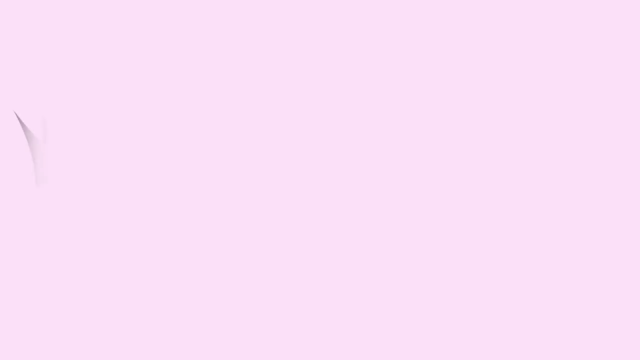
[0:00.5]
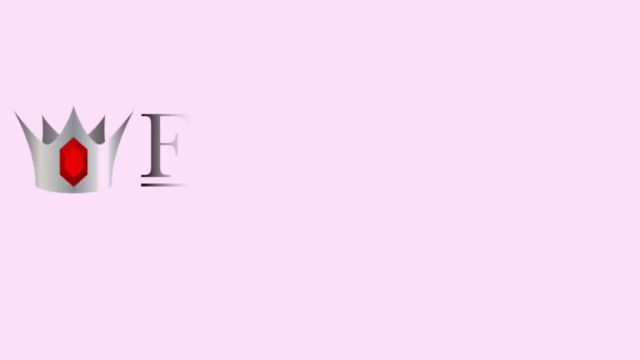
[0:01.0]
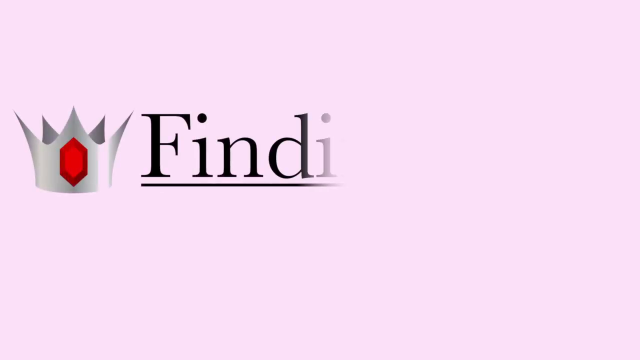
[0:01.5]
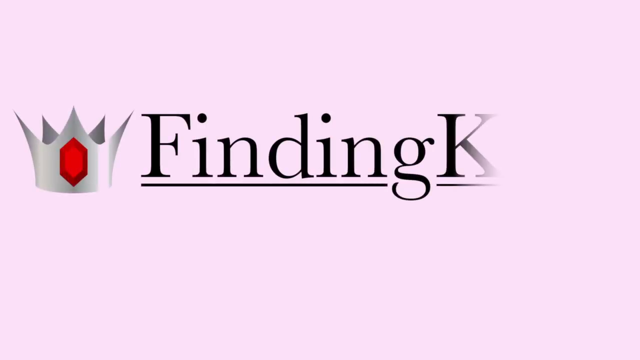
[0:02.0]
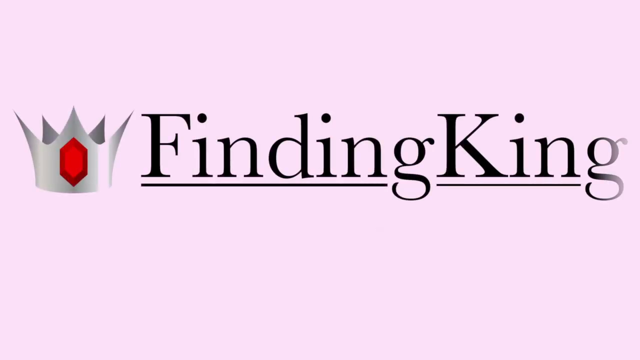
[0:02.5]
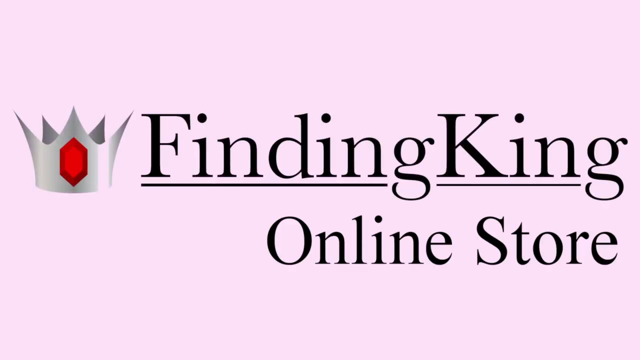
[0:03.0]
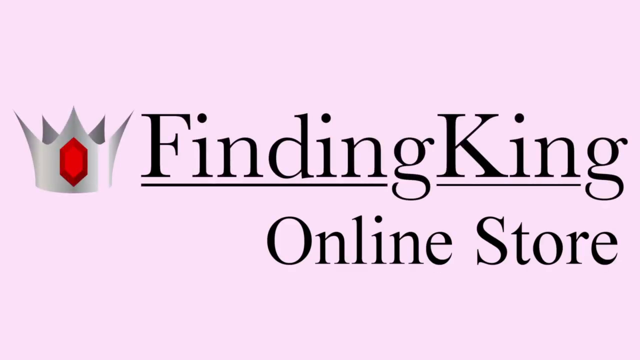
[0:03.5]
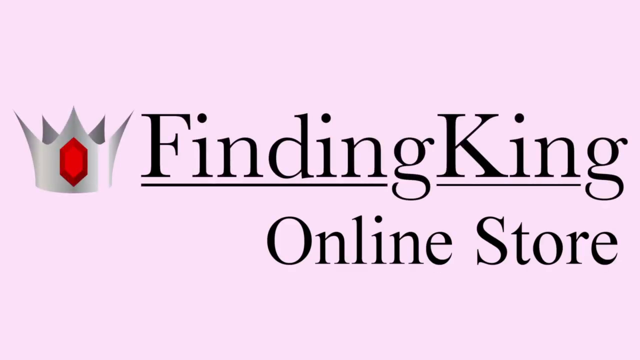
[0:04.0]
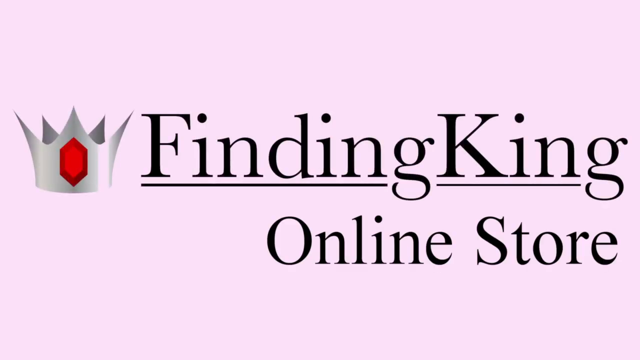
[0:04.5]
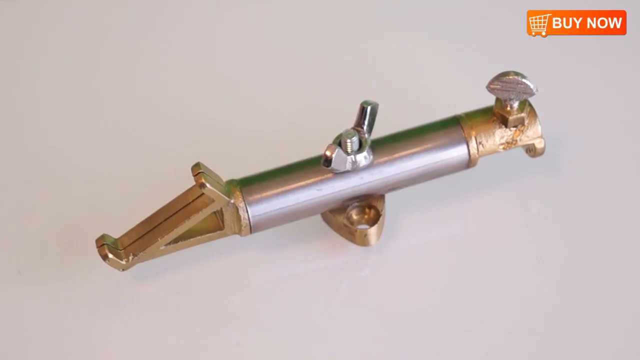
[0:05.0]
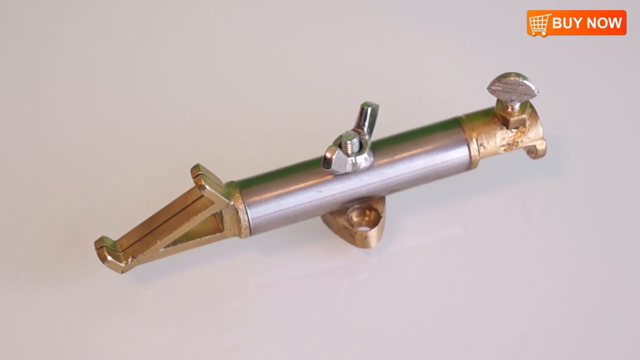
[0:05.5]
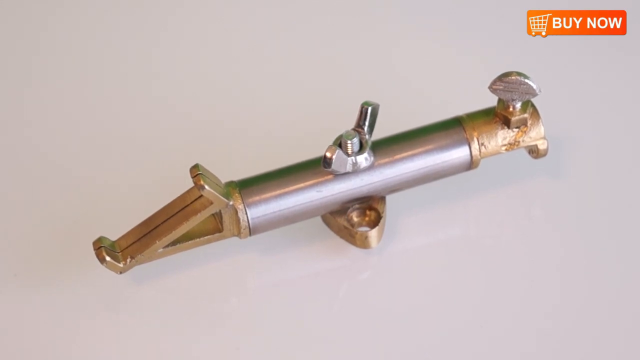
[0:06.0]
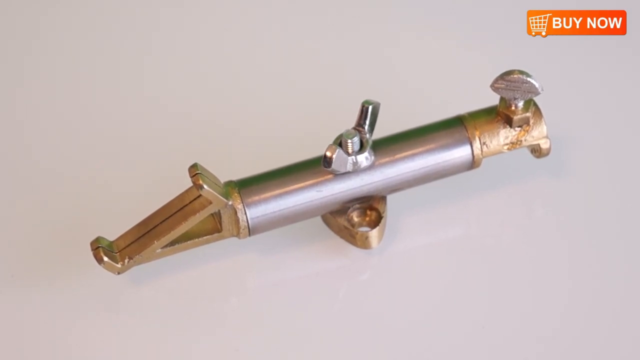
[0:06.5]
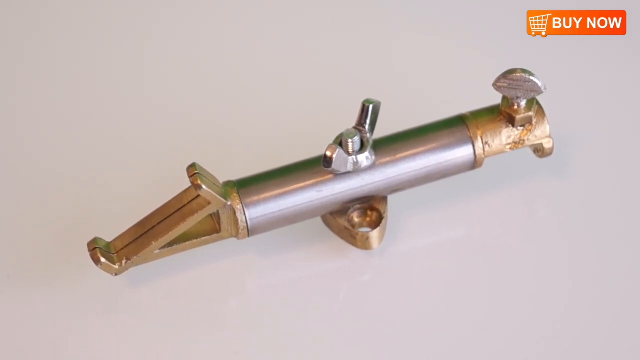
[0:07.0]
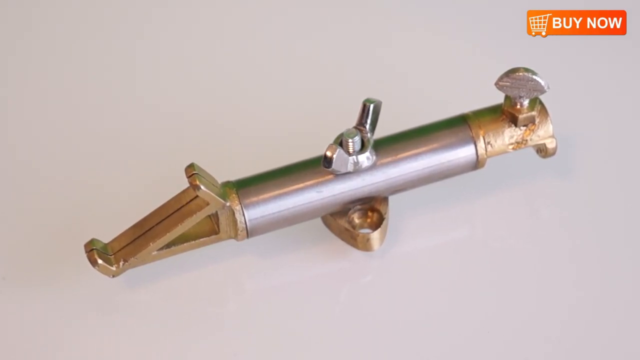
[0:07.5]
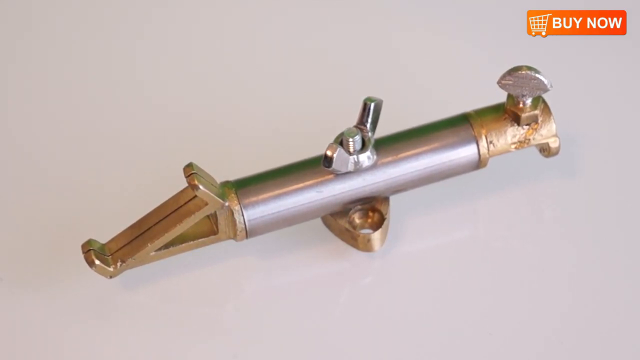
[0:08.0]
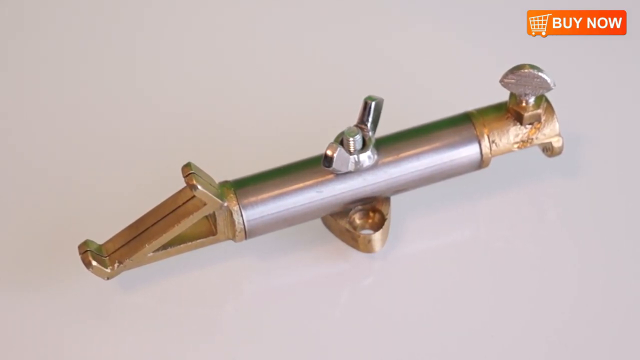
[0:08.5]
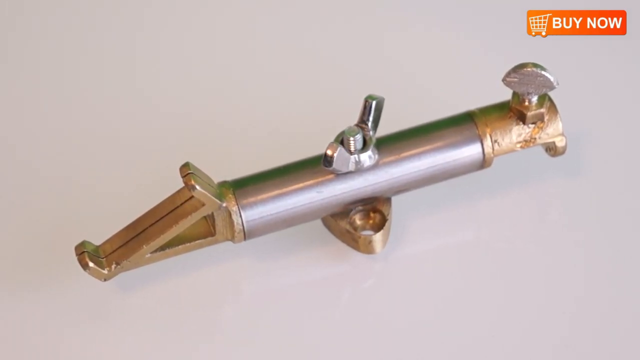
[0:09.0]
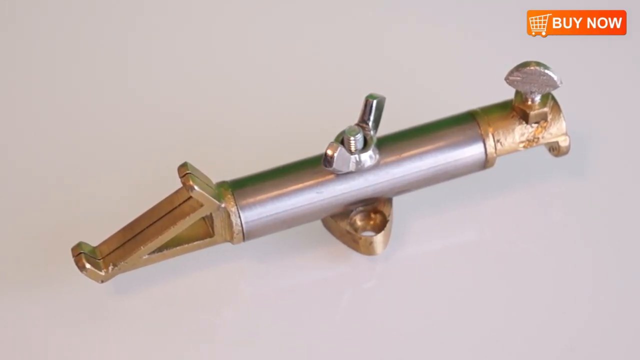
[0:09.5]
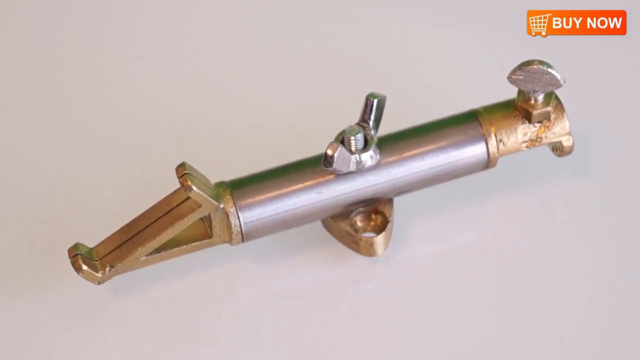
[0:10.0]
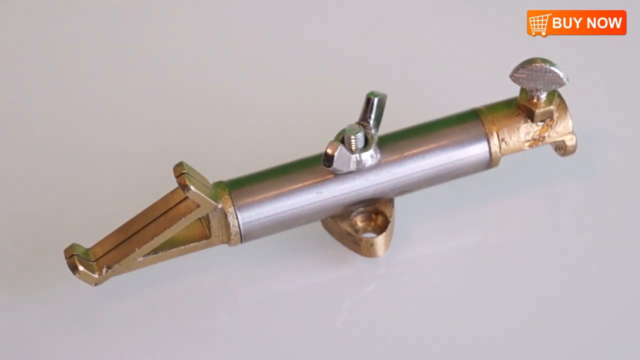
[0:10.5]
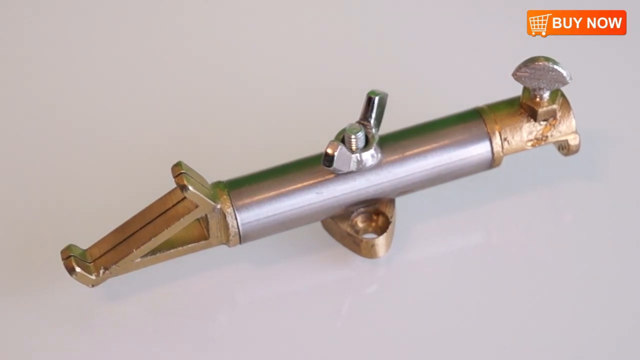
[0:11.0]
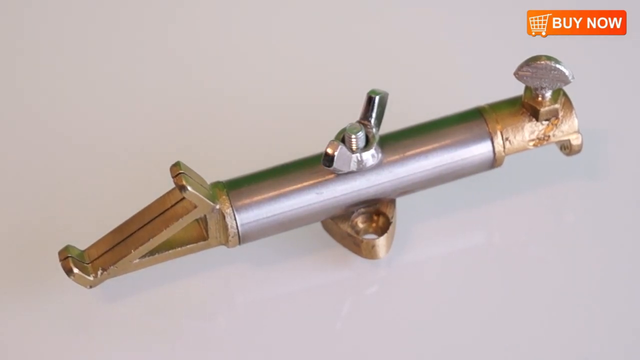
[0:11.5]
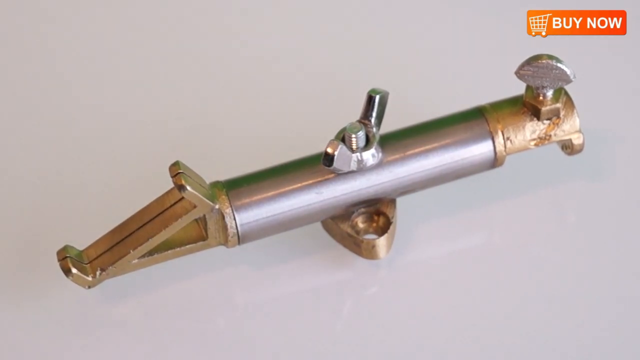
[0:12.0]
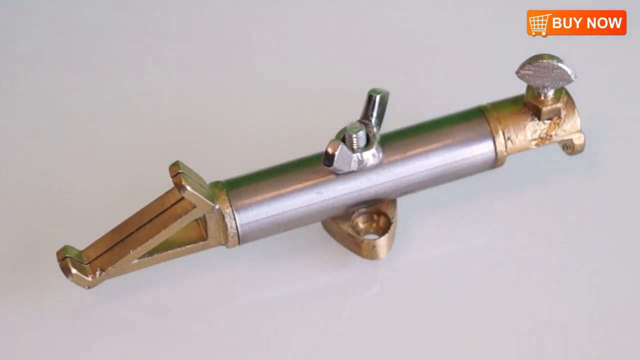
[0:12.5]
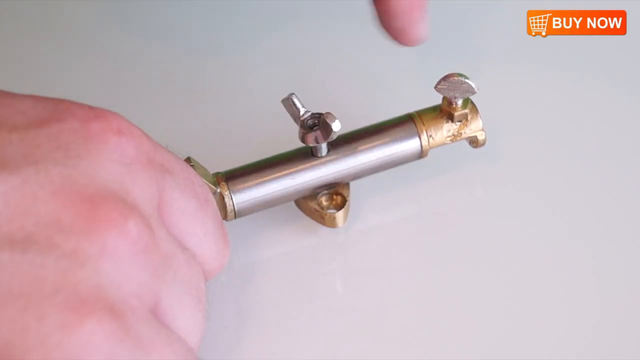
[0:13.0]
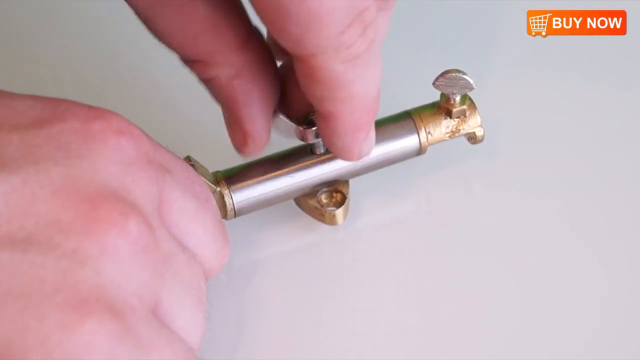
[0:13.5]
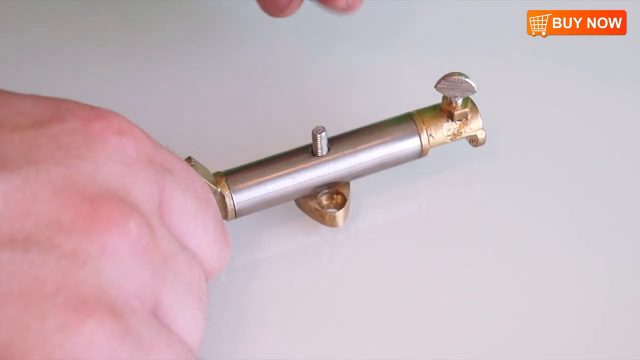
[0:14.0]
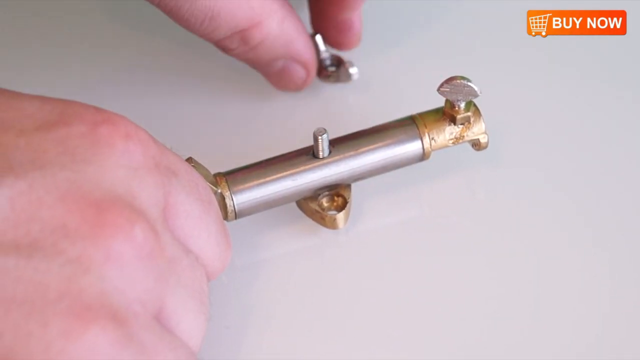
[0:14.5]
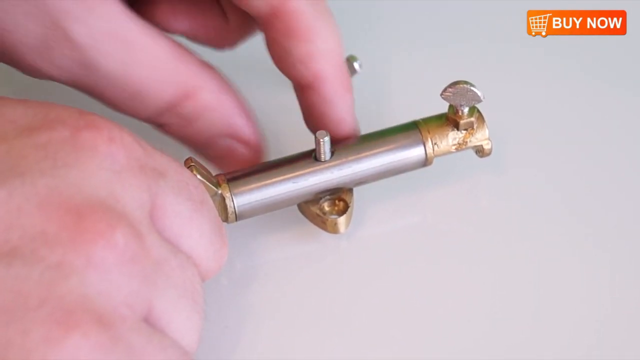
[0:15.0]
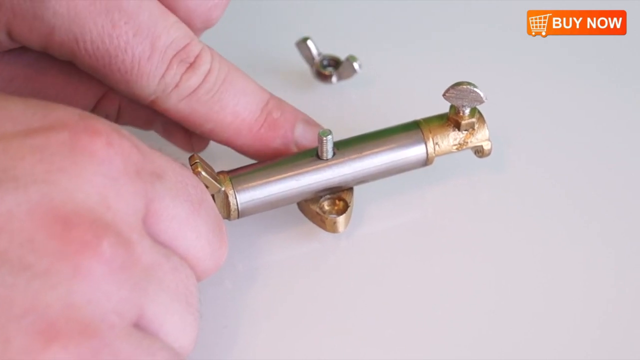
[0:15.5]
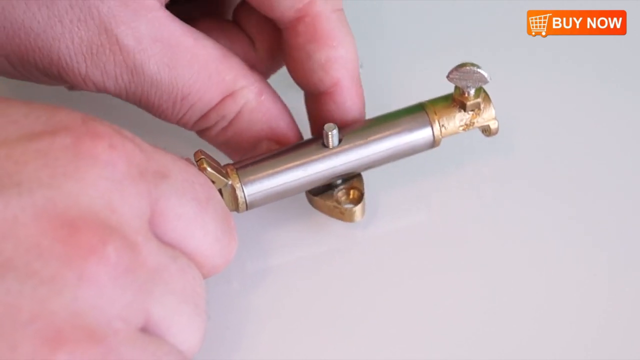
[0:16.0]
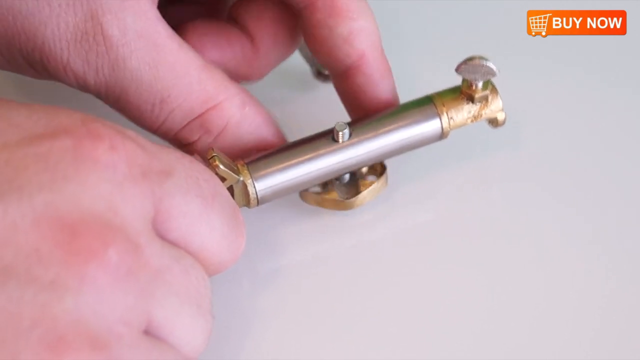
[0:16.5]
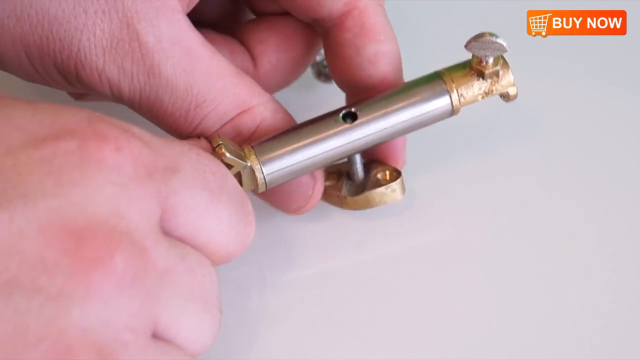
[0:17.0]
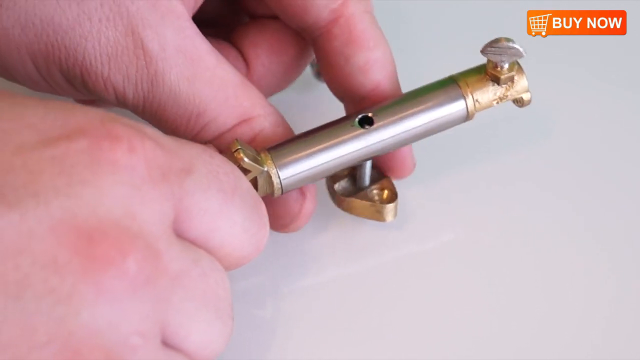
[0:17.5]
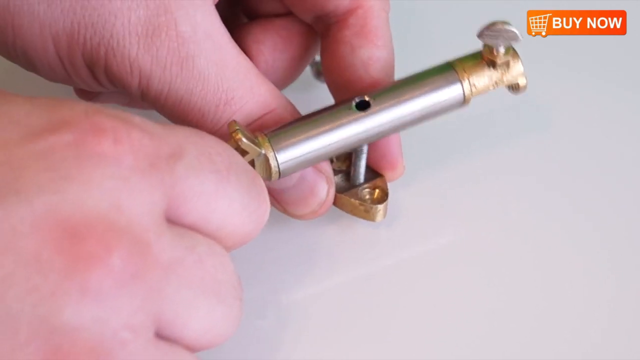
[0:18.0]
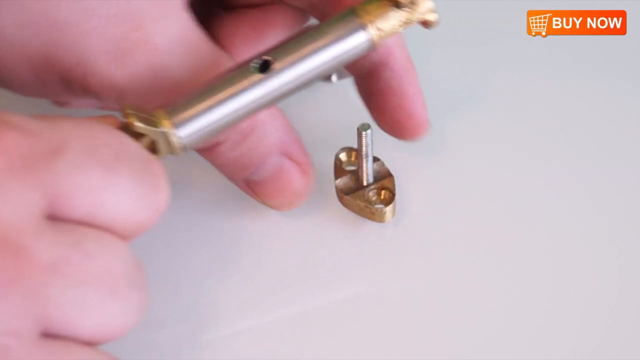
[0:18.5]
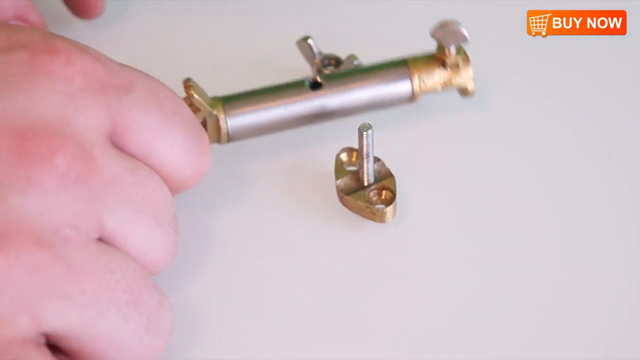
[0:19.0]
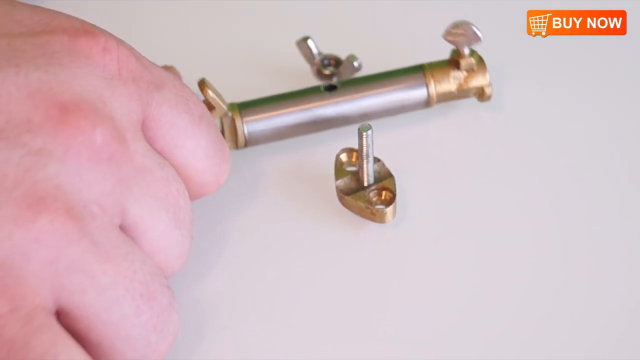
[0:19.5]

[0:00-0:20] A silver crown with a red stone in it appears, along with the words "finding king". A "buy now" button with a shopping cart is in the upper right of the video. A man takes a bolt out and twists the nut on the bolt; "finding king online store" is shown. The product looks brass and silver, seems to be on its side with a handle, and he shows how to unhook it. It seems to be on some type of white counter. No price is shown. The camera is very stable and shows the man's hands.